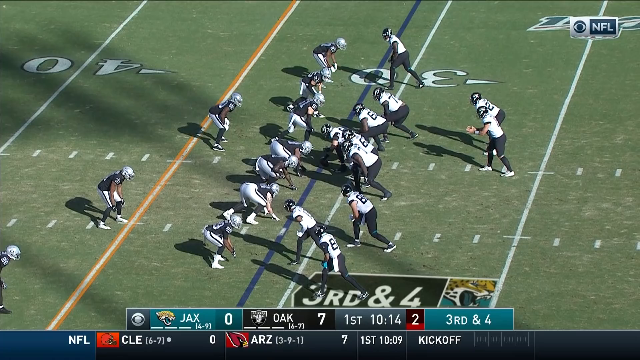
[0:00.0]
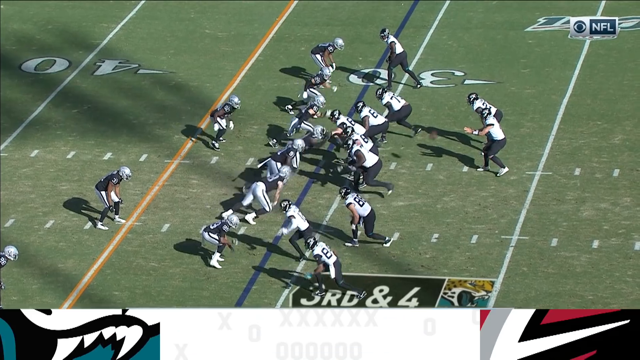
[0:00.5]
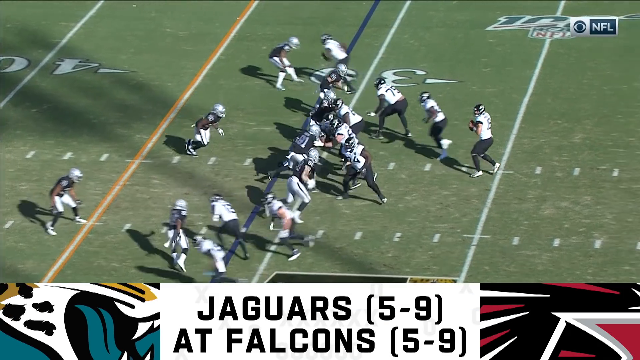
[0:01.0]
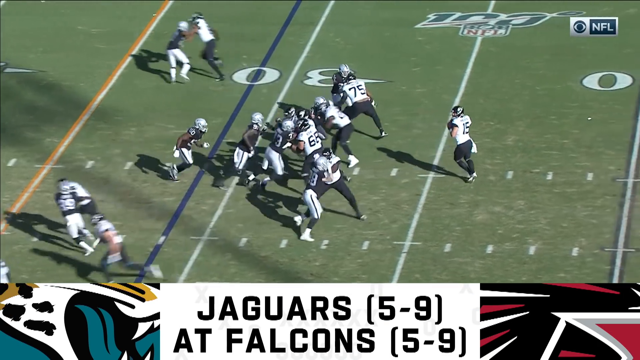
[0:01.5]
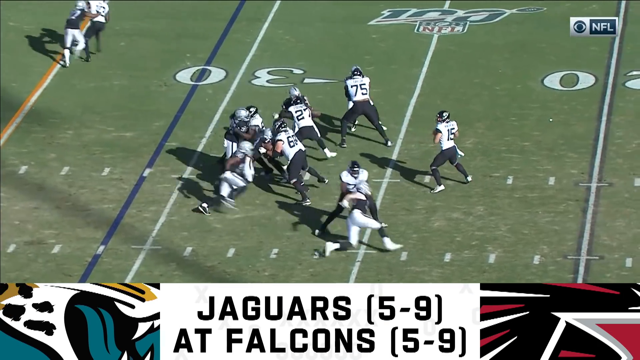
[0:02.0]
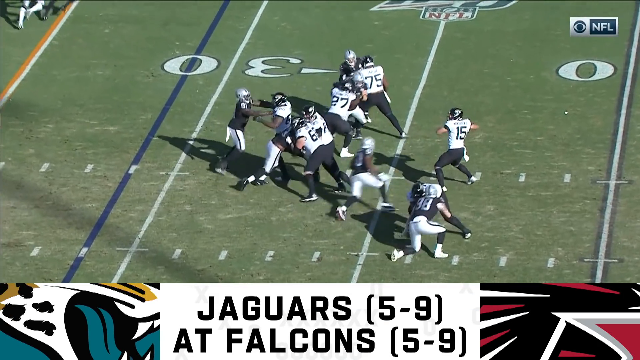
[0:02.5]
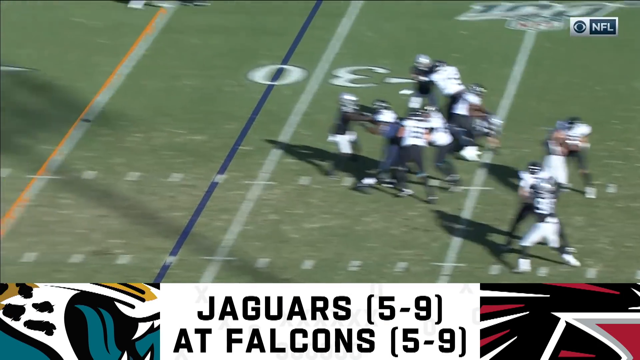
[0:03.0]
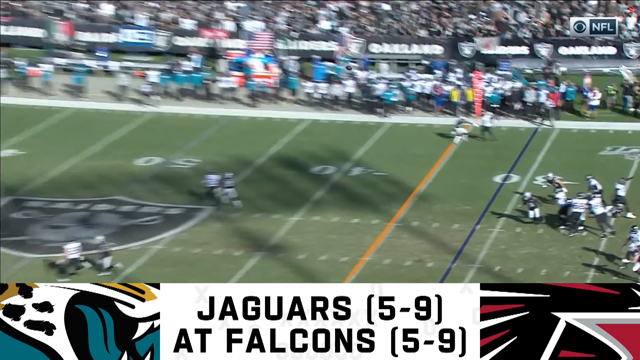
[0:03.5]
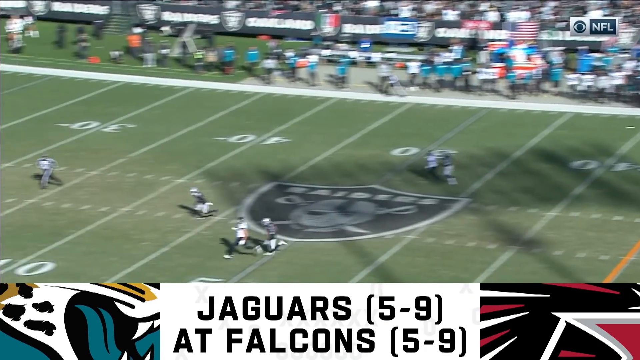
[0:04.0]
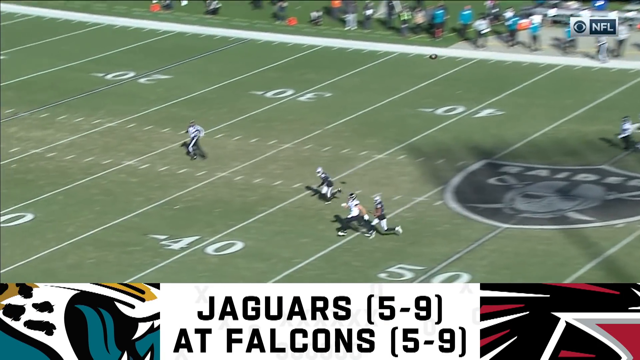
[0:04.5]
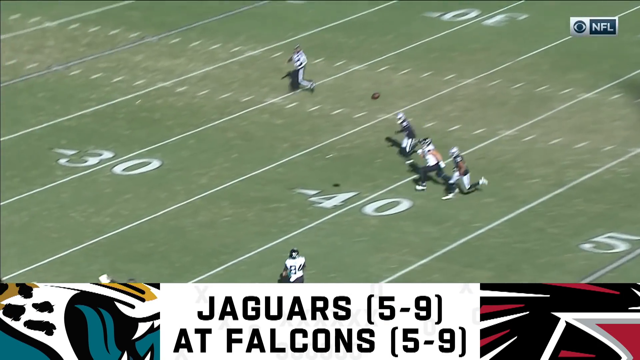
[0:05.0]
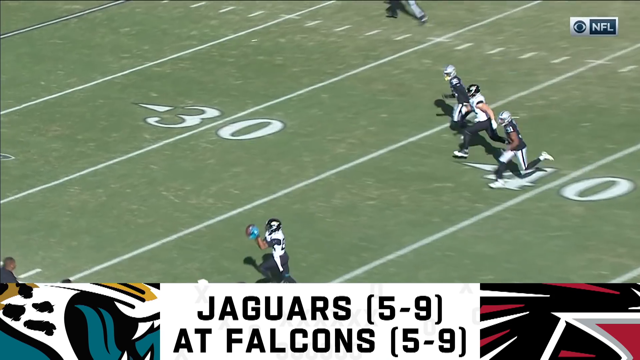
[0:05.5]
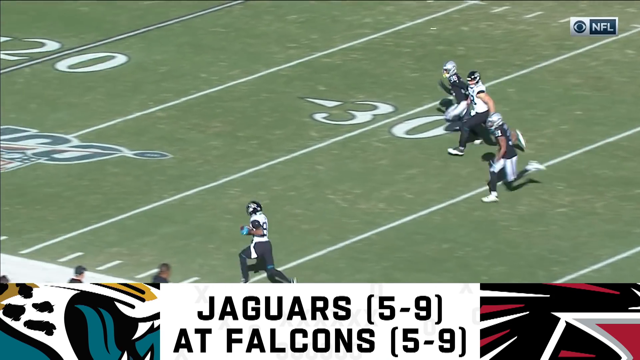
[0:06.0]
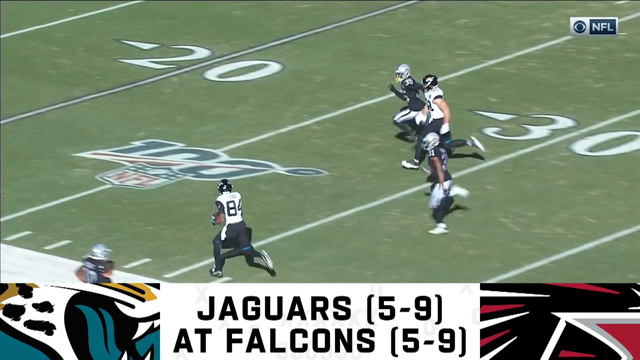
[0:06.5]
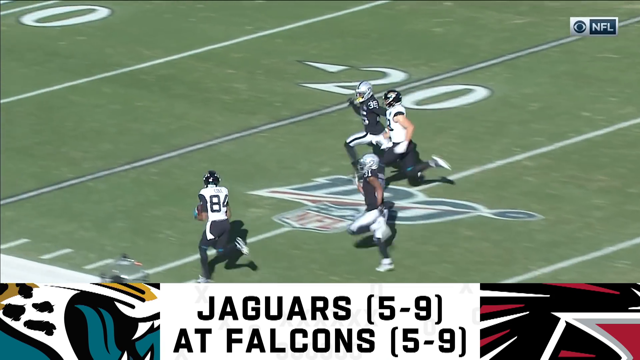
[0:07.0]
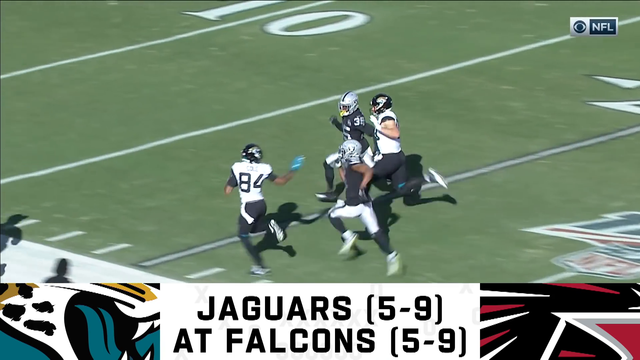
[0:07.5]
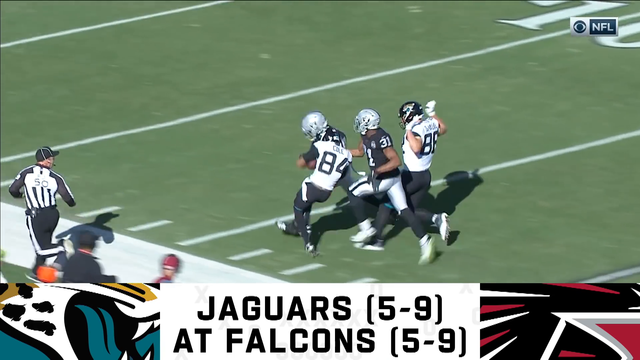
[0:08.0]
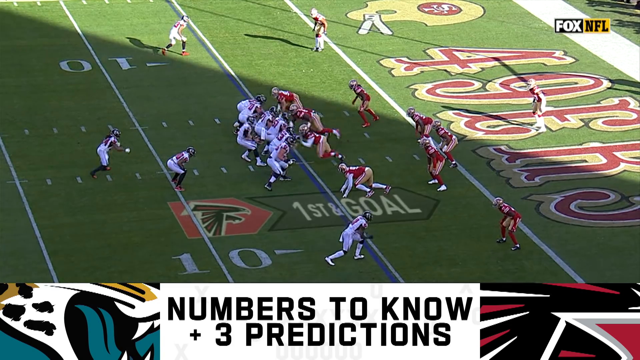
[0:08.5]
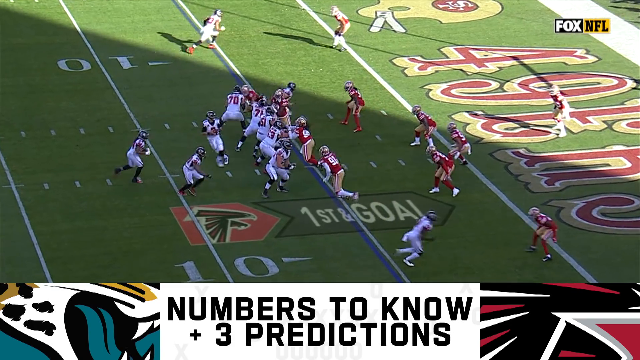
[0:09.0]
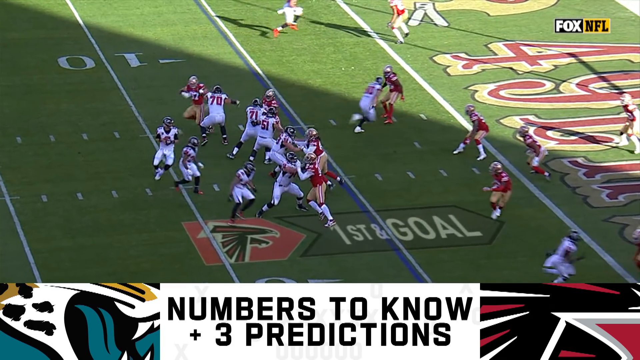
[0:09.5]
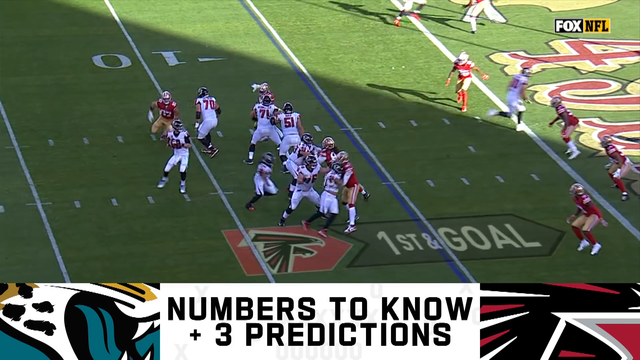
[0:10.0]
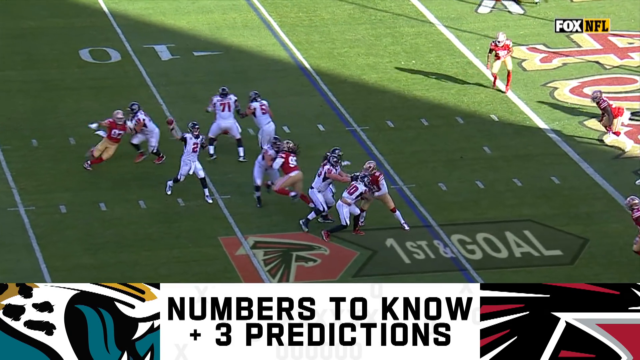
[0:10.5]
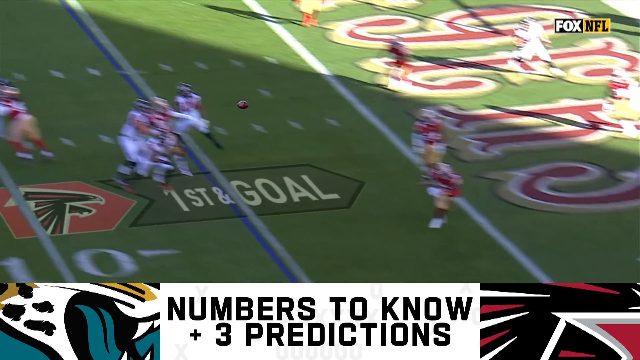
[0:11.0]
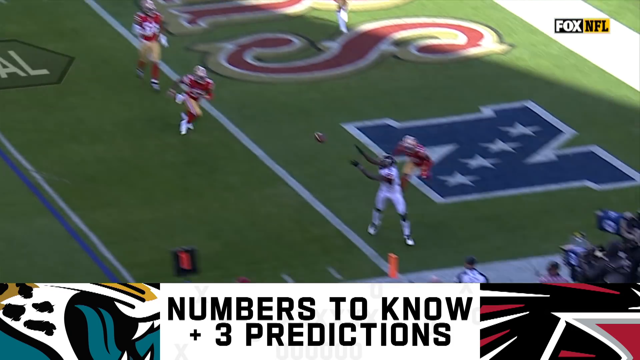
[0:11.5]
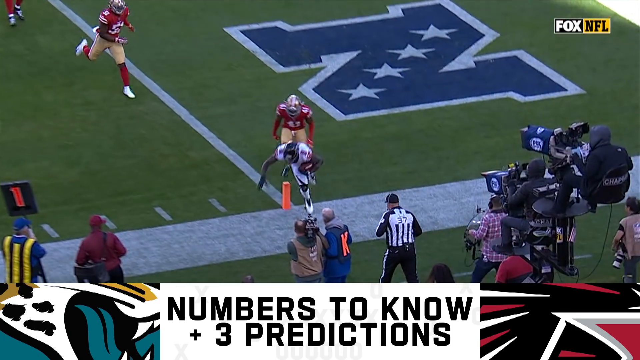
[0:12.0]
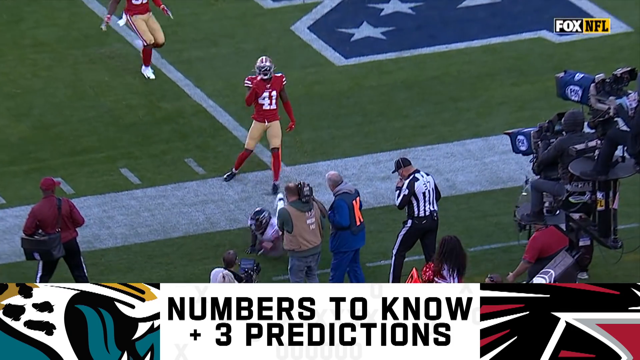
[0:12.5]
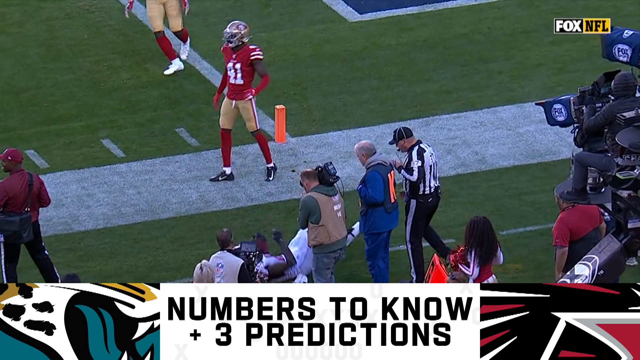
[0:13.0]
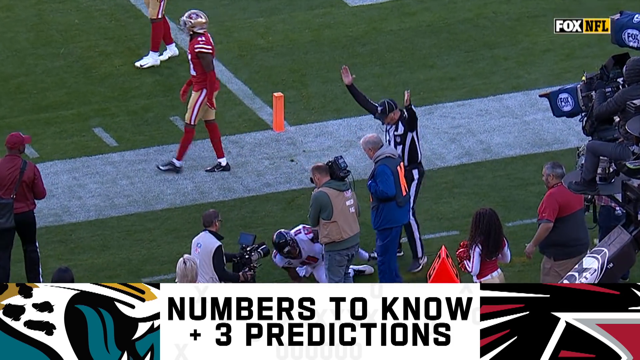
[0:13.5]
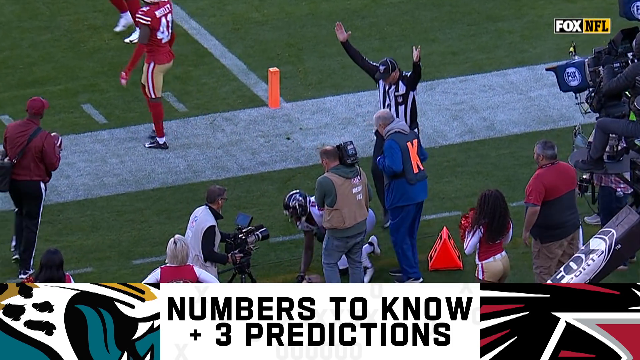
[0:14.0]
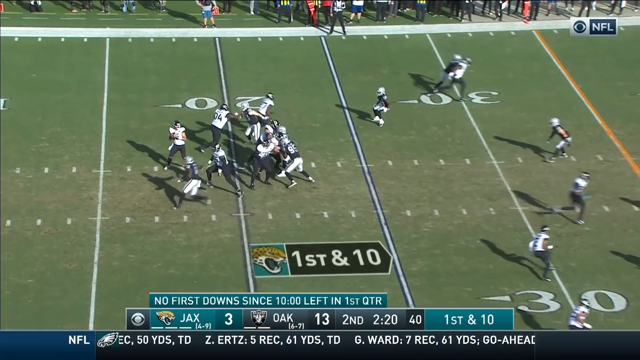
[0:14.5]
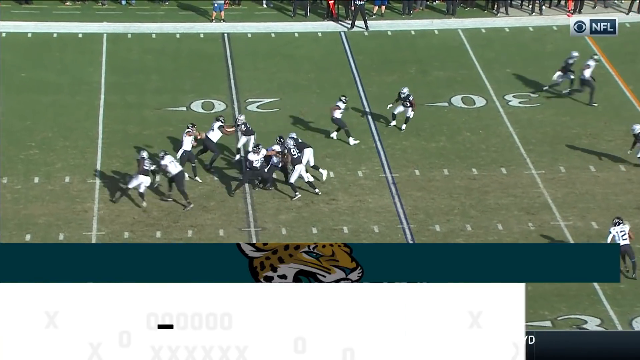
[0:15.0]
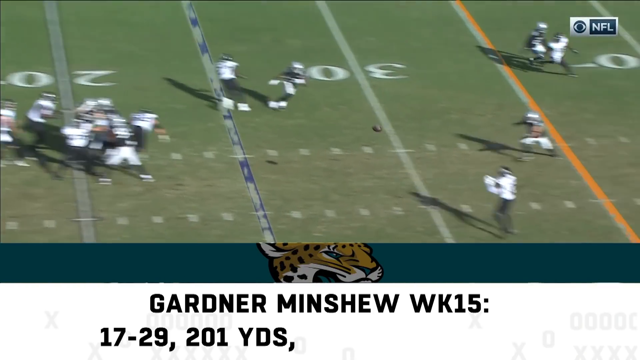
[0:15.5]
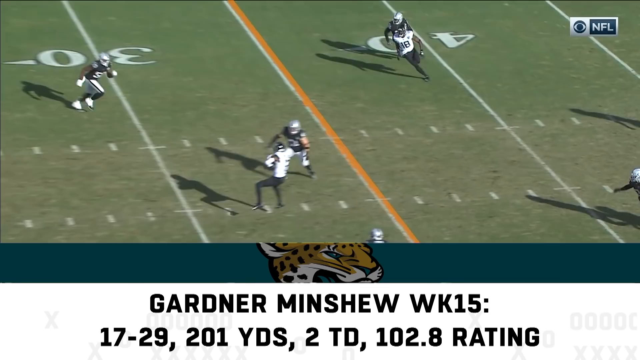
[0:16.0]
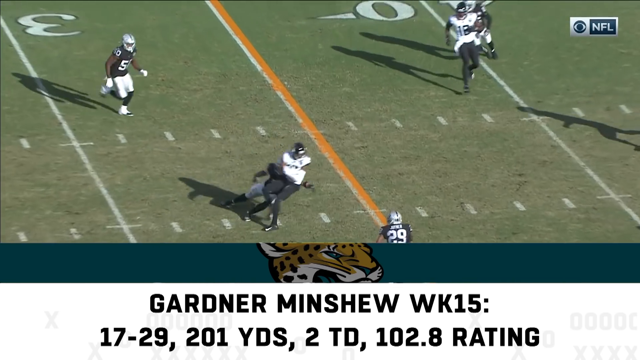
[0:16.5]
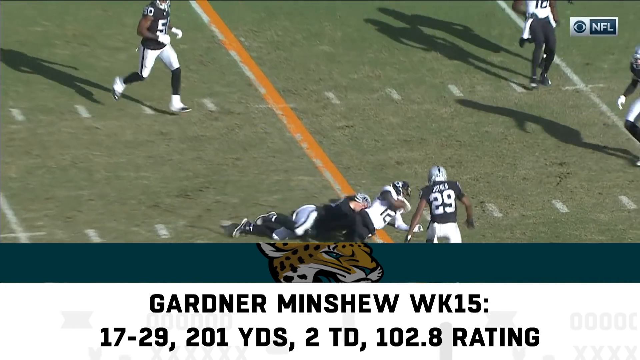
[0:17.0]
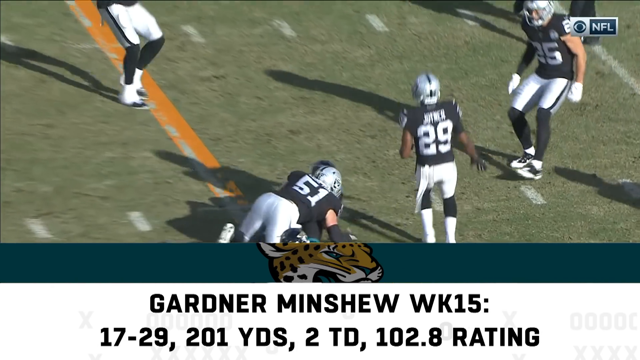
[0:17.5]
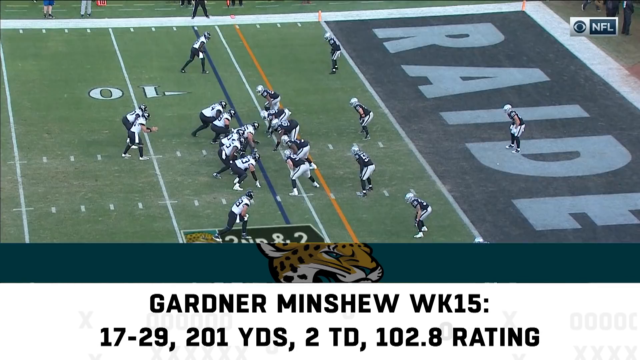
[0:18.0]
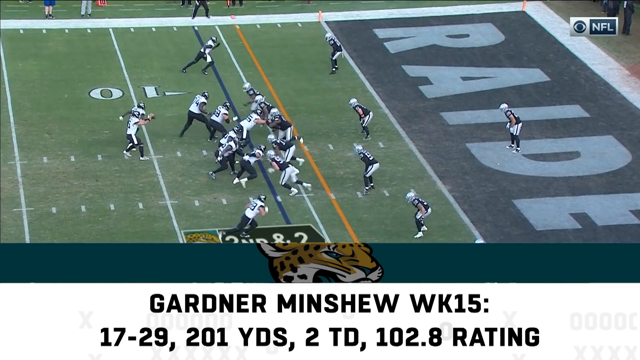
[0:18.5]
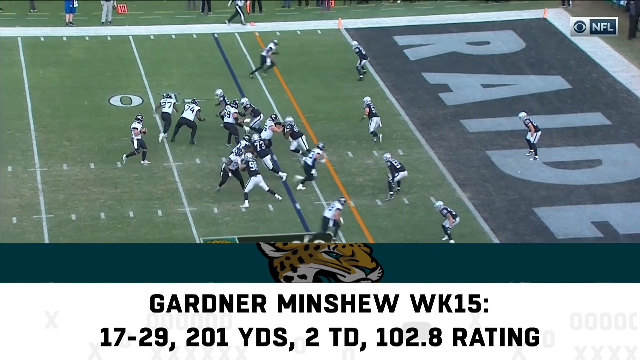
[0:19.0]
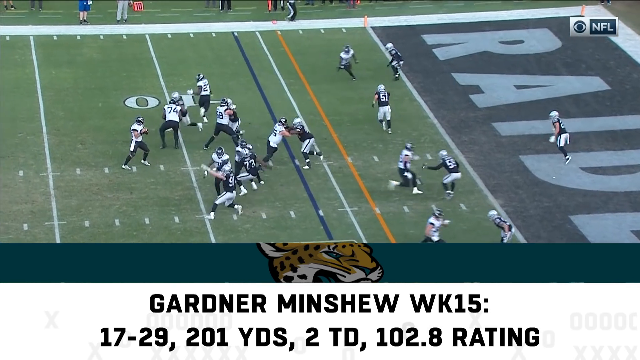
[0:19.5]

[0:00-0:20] Clips from American football games follow one another quickly. The first is from a game between the Oakland Raiders, 6-7 on the season, and the Jacksonville Jaguars, 4 wins and 9 losses. It is the first quarter, and the ball is apparently with Jacksonville. A long pass goes downfield and is caught by a wide-open receiver. The video then moves to a game between the San Francisco 49ers and possibly the Denver Broncos, shown on Fox NFL, where a touchdown is scored on a pass. Another pass goes downfield and a player gets a first down. The video returns to Jacksonville against the Raiders, with stats shown for Gardner Minchew, who has had a good passing game.